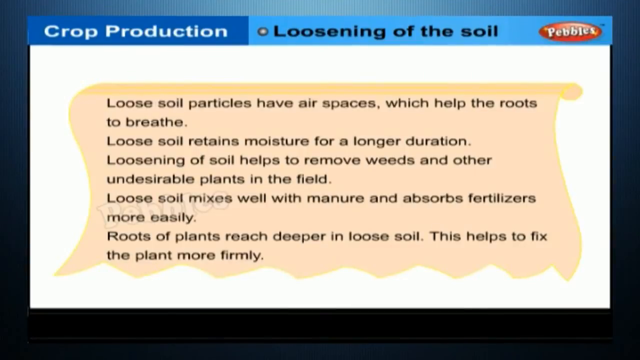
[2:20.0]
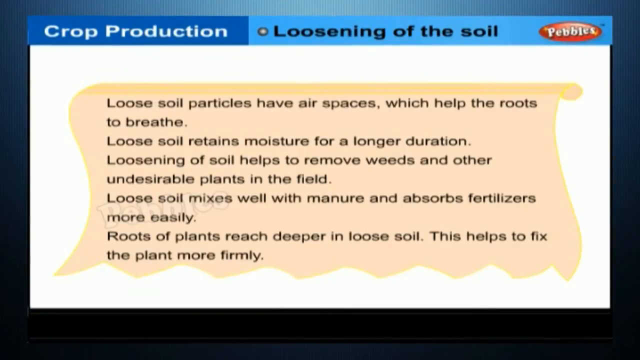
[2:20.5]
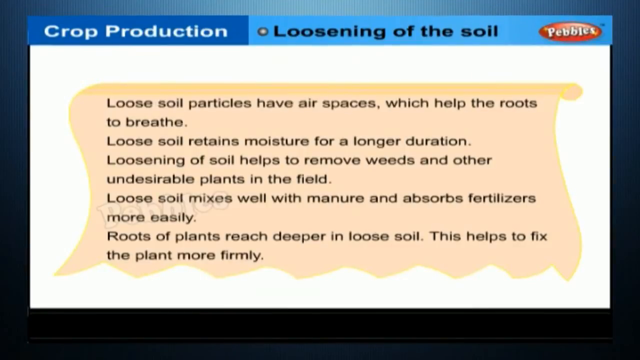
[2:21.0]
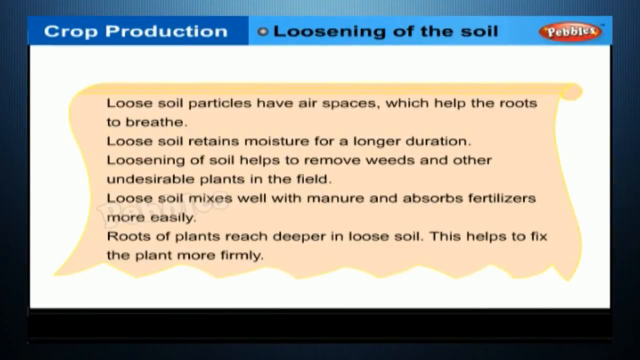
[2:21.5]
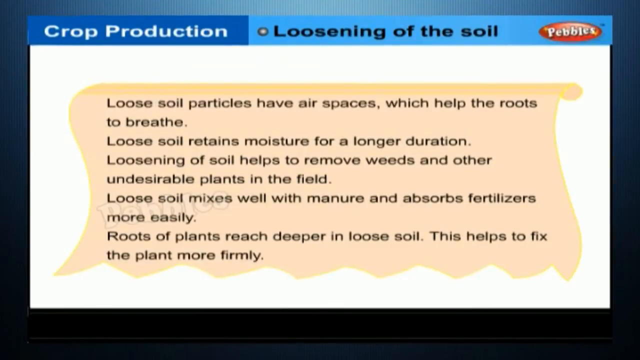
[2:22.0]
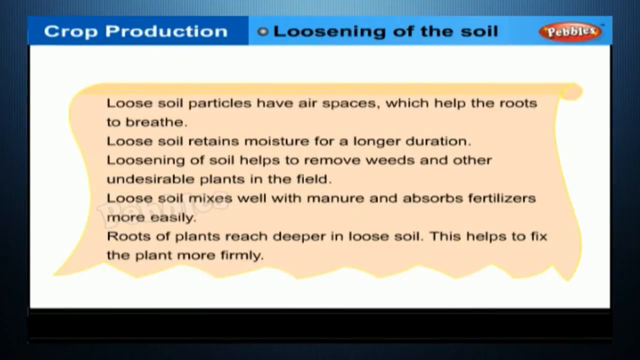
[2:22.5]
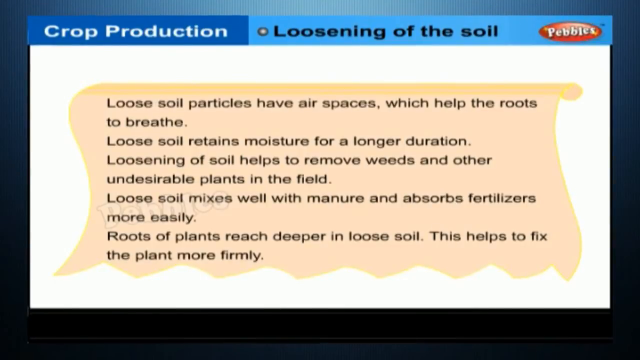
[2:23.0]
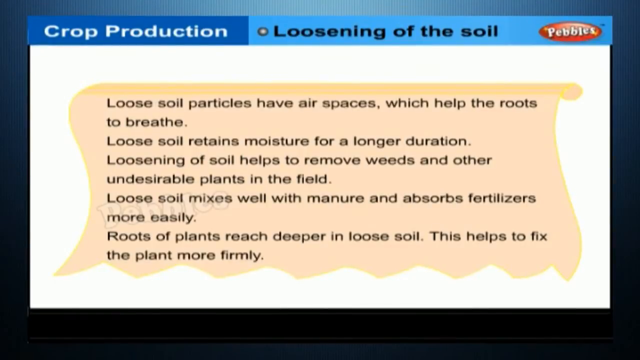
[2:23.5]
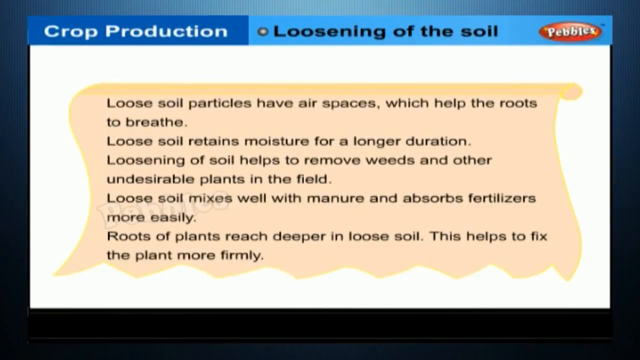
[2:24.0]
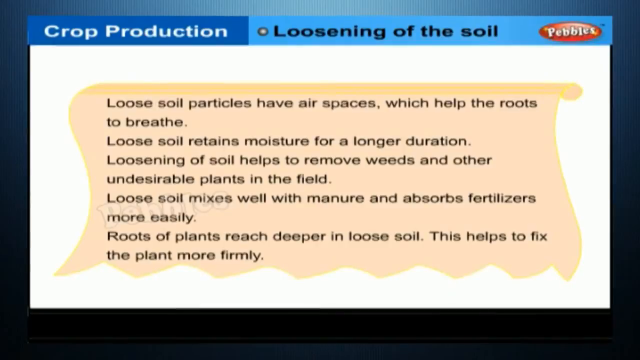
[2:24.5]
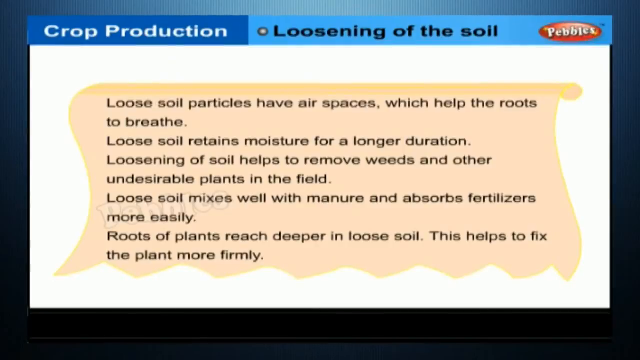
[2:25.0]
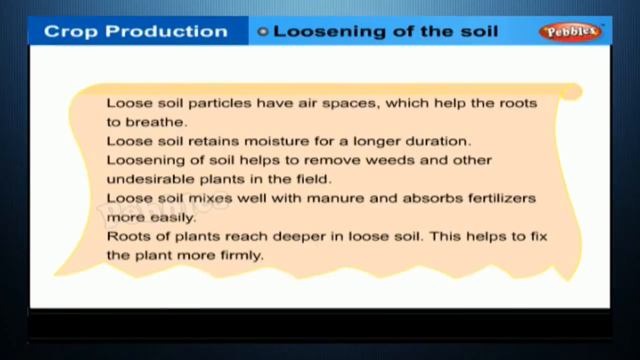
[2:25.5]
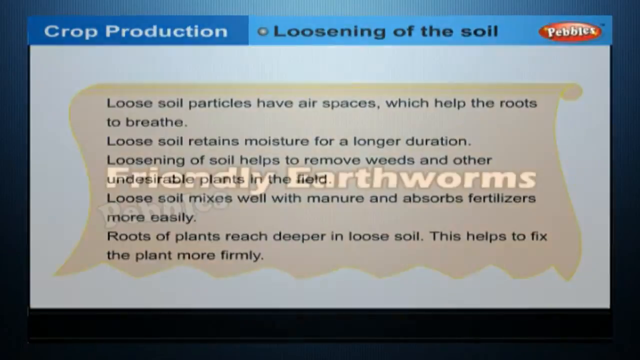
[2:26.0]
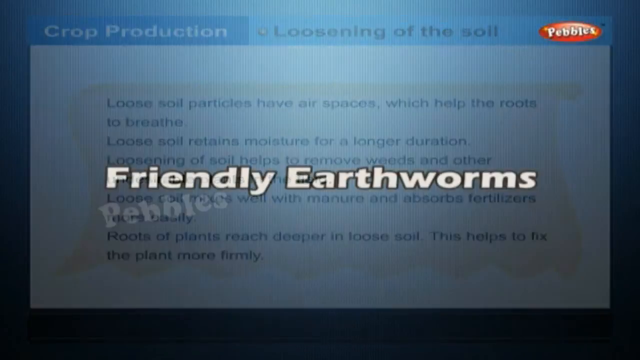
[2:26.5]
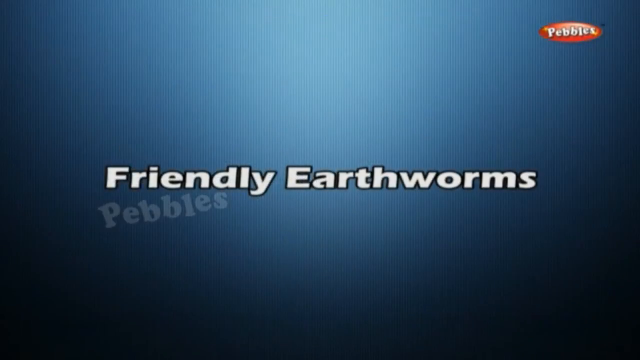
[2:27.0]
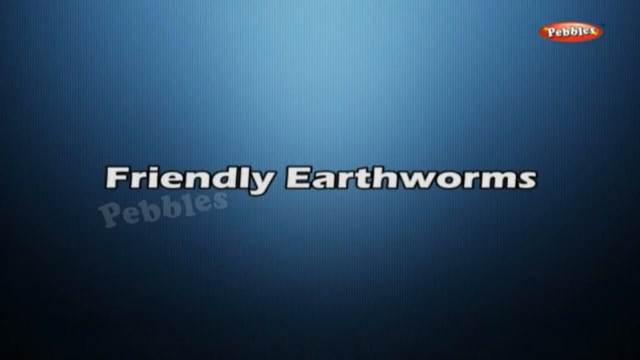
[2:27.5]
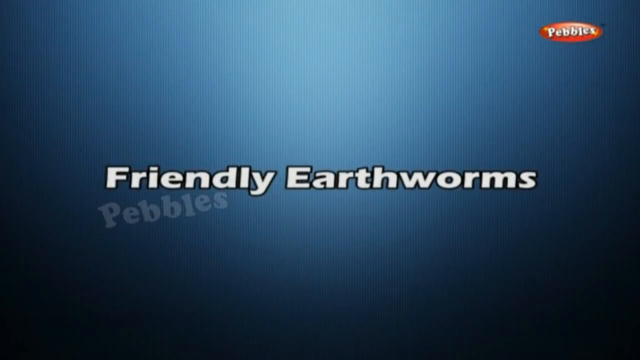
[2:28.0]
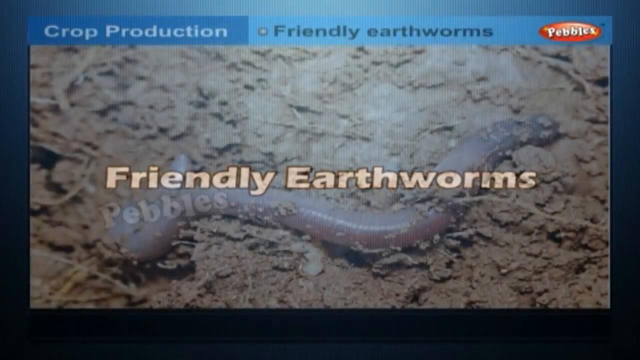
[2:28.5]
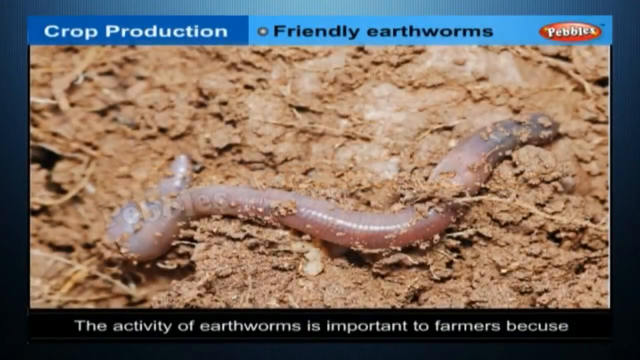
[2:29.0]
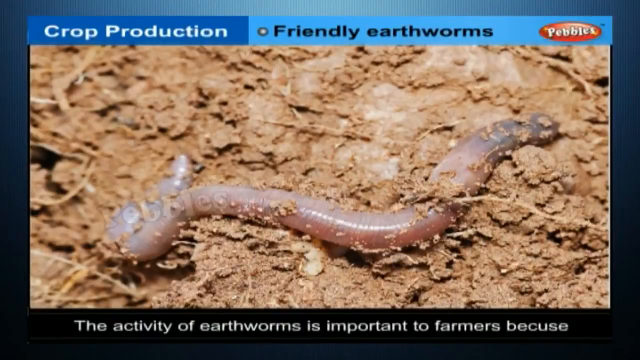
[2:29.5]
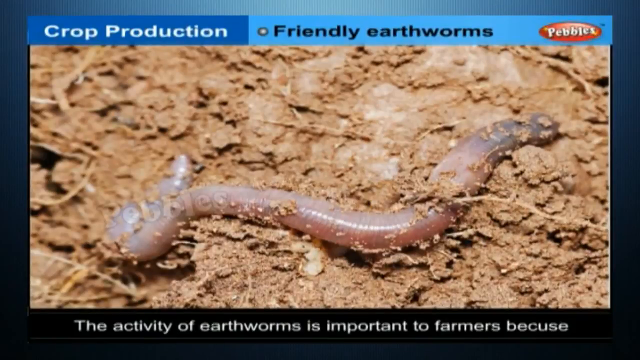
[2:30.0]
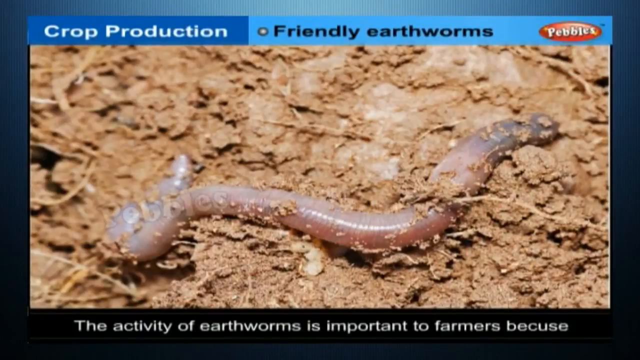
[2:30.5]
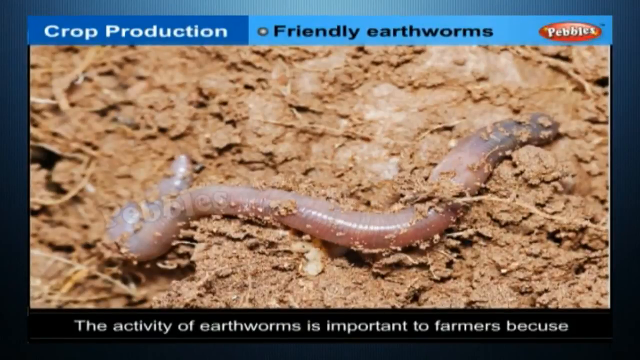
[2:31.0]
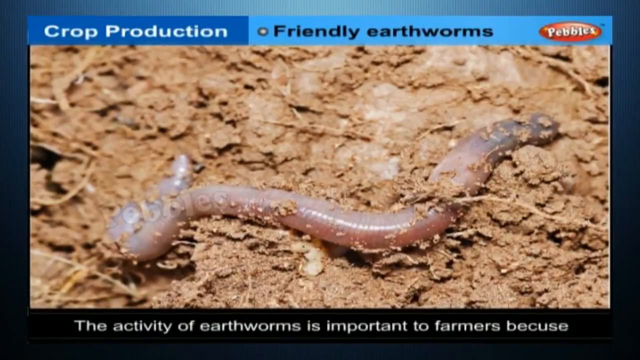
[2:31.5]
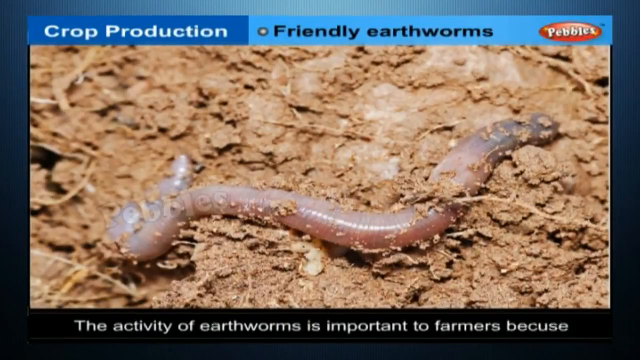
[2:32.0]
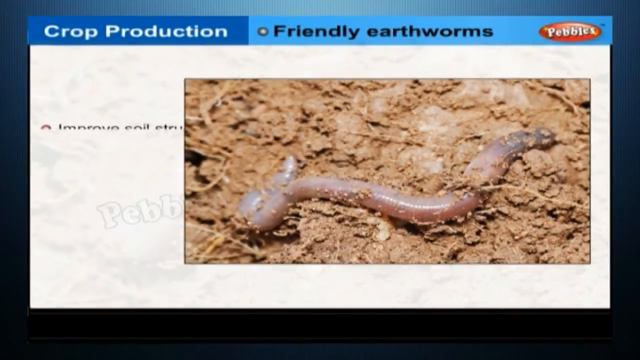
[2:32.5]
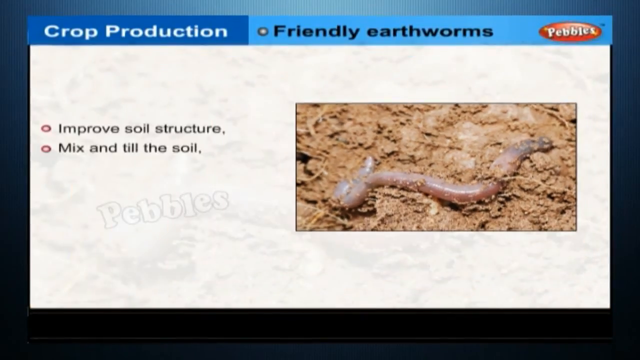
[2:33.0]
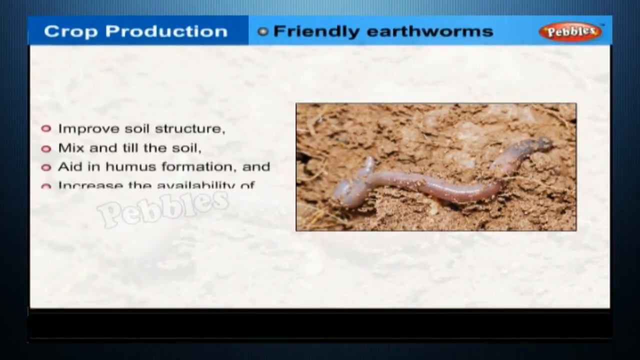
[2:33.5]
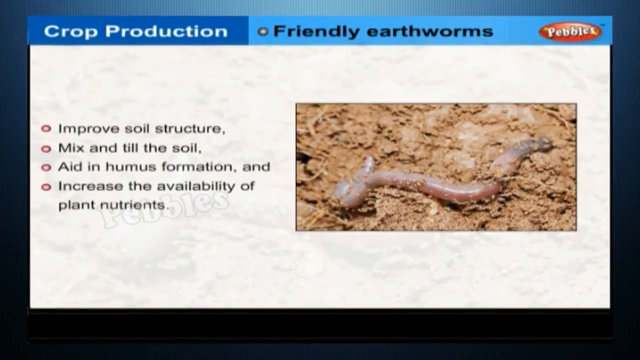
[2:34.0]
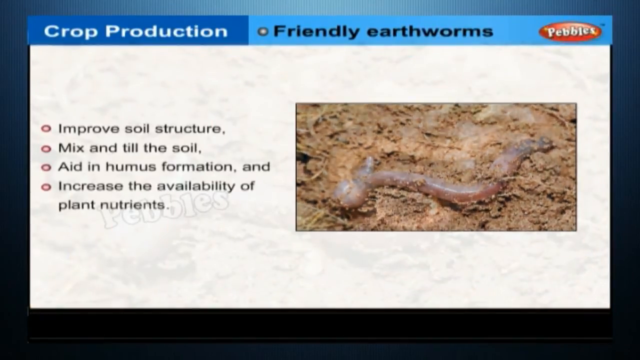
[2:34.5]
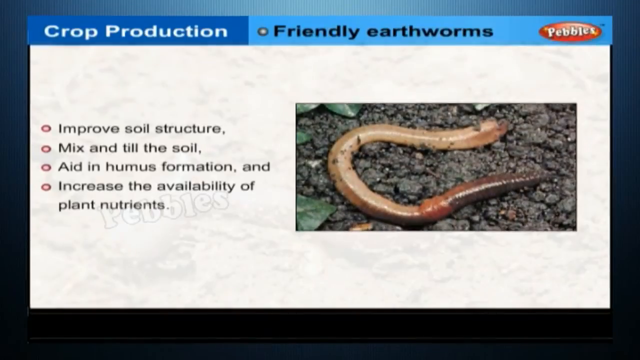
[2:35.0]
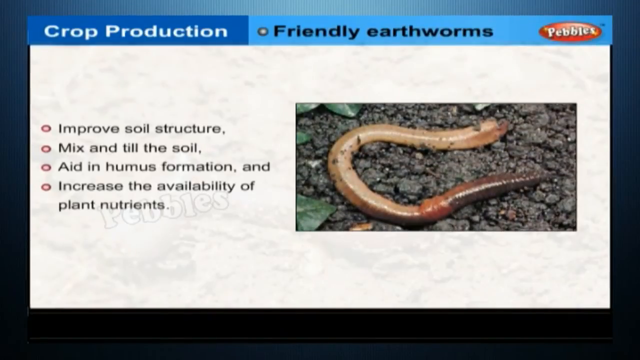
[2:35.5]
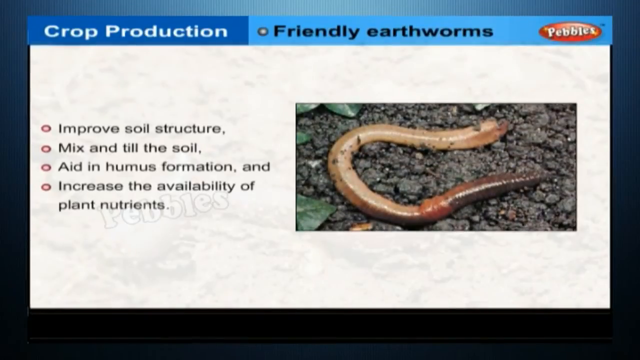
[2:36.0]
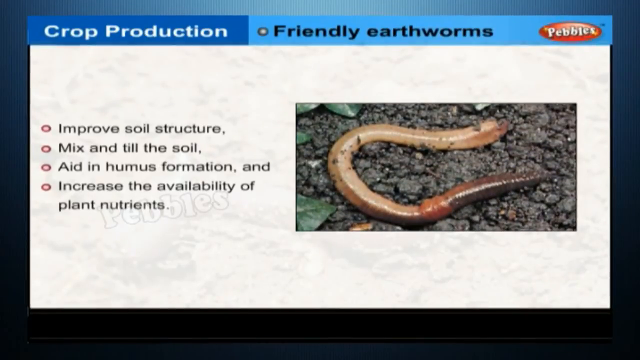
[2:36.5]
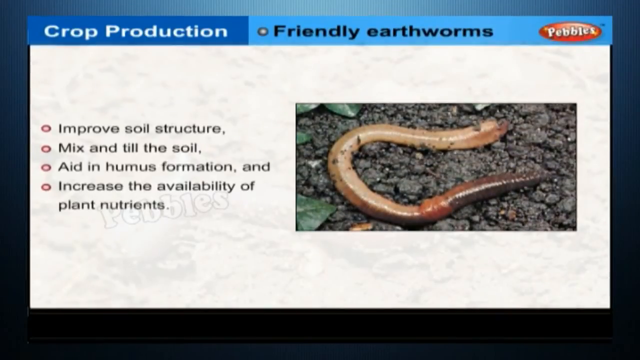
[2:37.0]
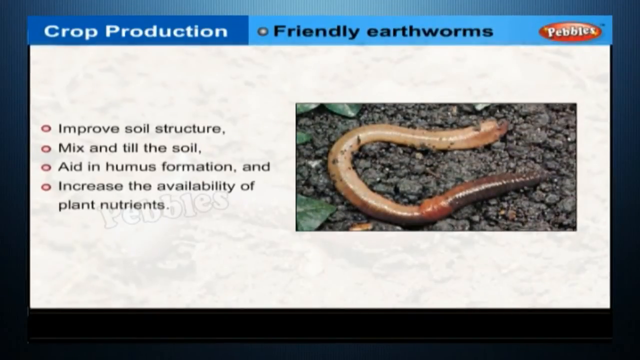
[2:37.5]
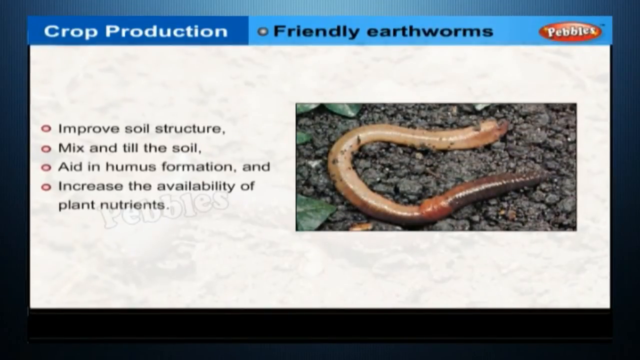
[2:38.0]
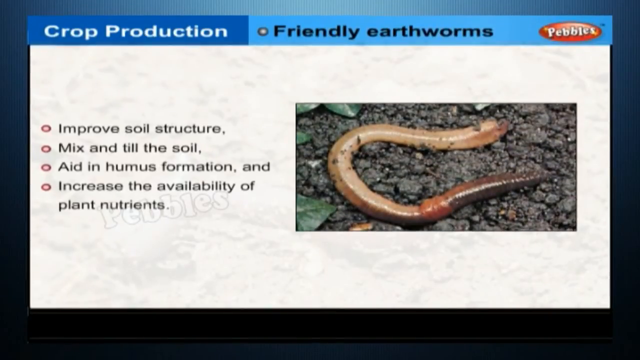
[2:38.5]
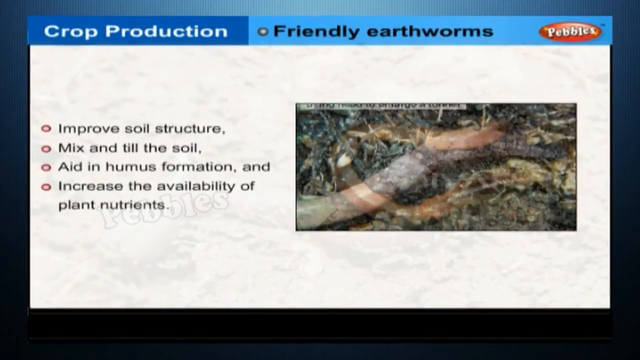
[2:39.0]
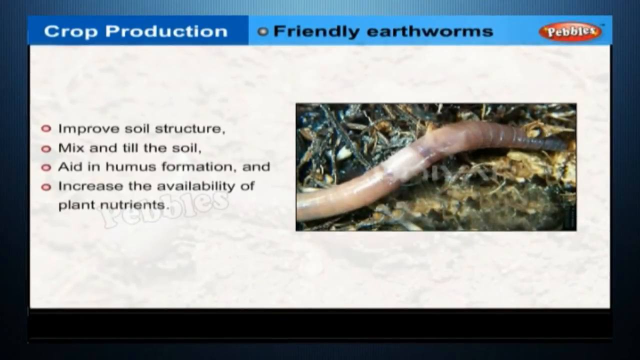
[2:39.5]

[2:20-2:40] The loosening of the soil section continues, with the pink scroll reading "Loose soil particles are bare spaces which help the roots to breathe. Loose soil retains moisture for a longer duration. Loosening of soil helps to remove weeds and other undesirable plants in the field. Loose soil mixes well with manure and absorbs fertilizers more easily. Roots of plants reach deeper in loose soil. This helps to fix the plant more firmly." The page then changes to another title page on a dark blue background reading "Friendly Earthworms". A large close-up photograph shows an earthworm on top of some soil, its shape bending and its individual segments visible. The caption underneath reads "The activity of earthworms is important to farmers because..." The image of the earthworm then shrinks, and a list of reasons appears on the left: improved soil structure, mix and till the soil, aid in humus formation, and increase the availability of plant nutrients. Another image of a worm appears on the right-hand side.